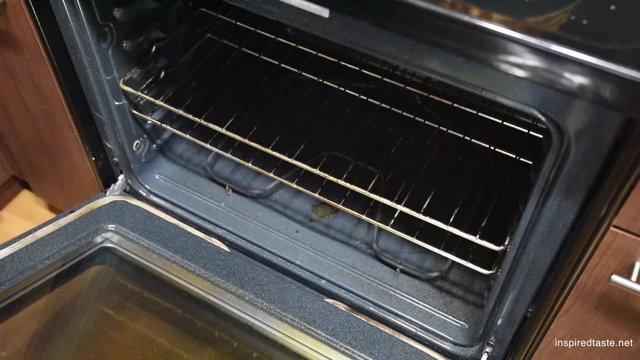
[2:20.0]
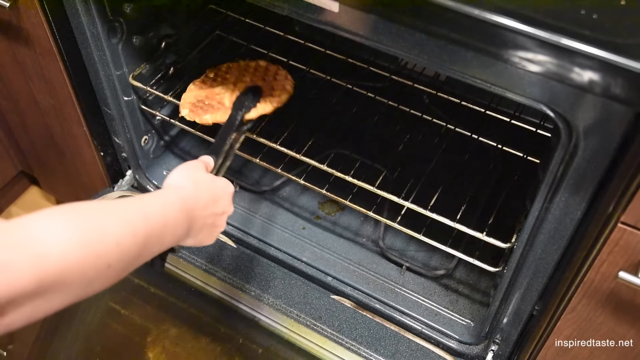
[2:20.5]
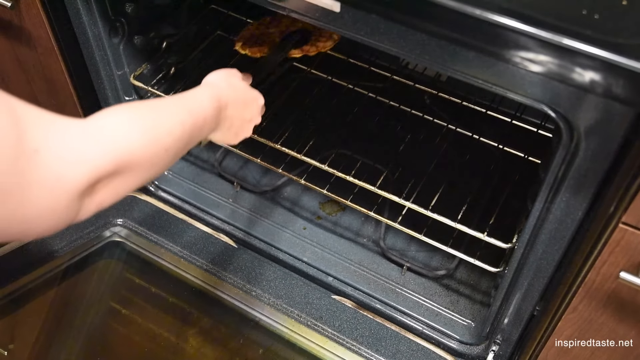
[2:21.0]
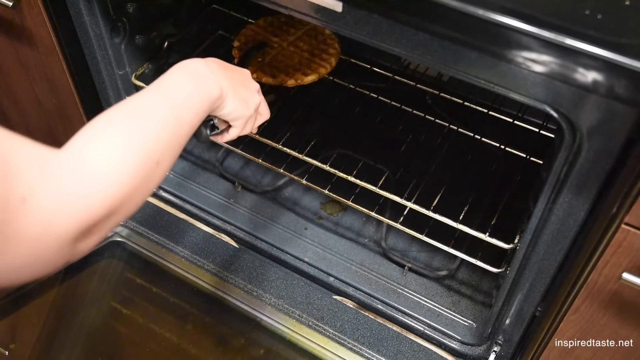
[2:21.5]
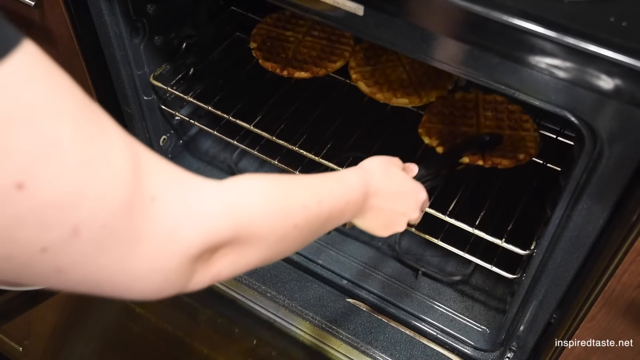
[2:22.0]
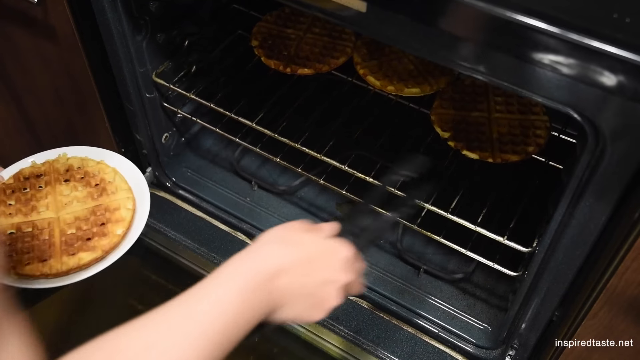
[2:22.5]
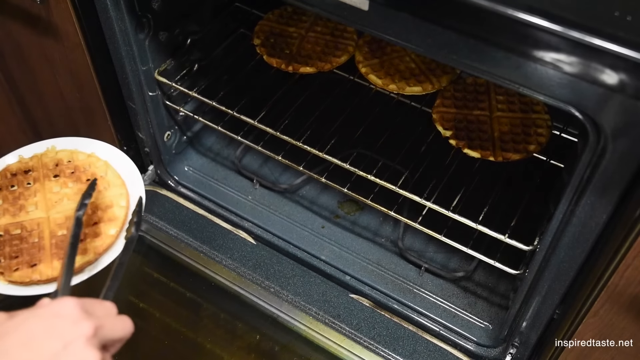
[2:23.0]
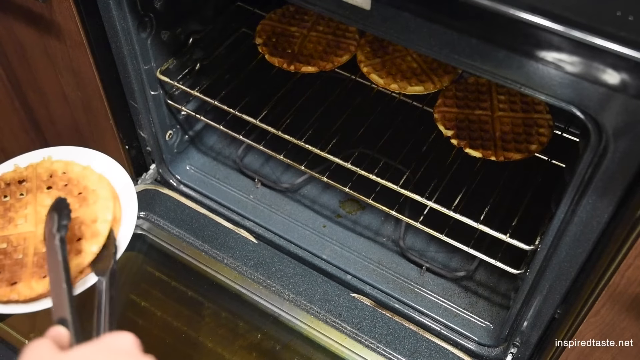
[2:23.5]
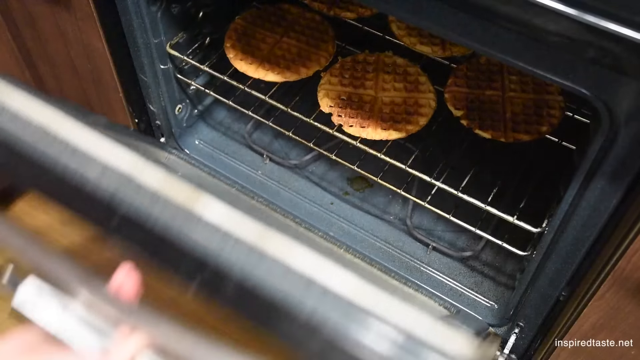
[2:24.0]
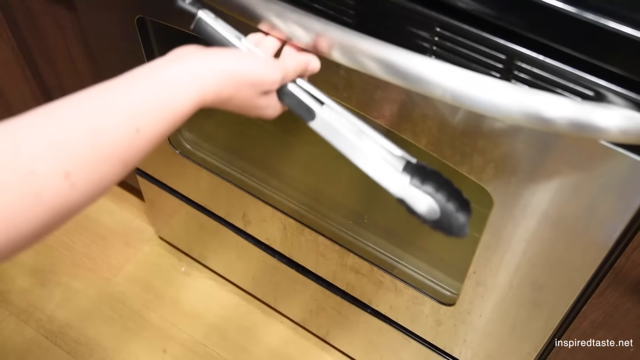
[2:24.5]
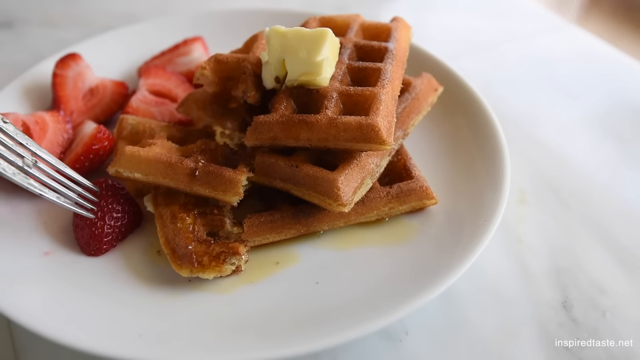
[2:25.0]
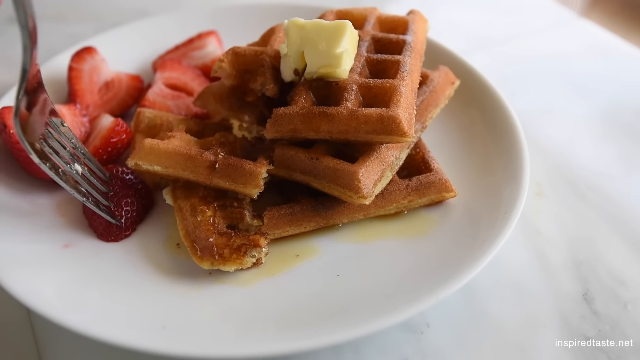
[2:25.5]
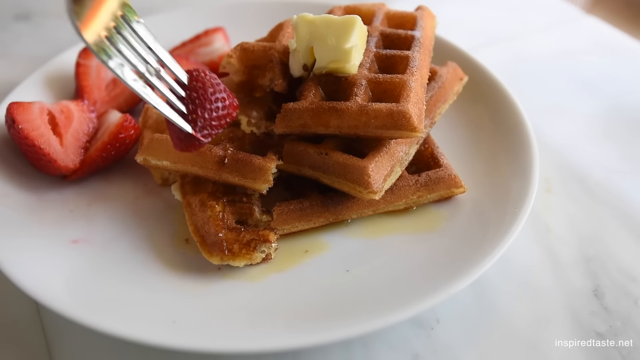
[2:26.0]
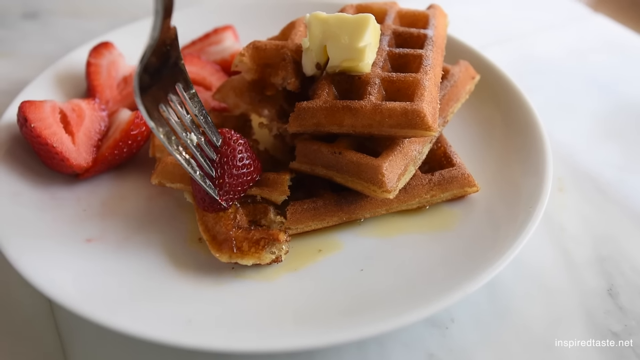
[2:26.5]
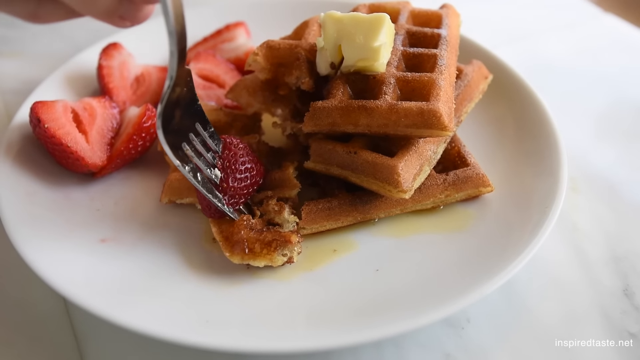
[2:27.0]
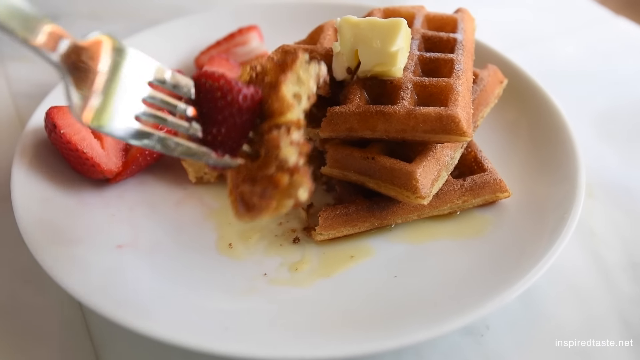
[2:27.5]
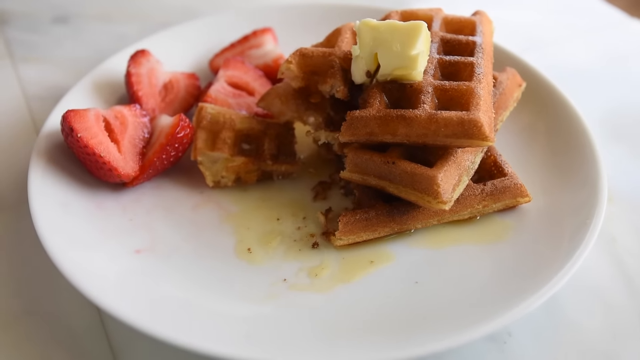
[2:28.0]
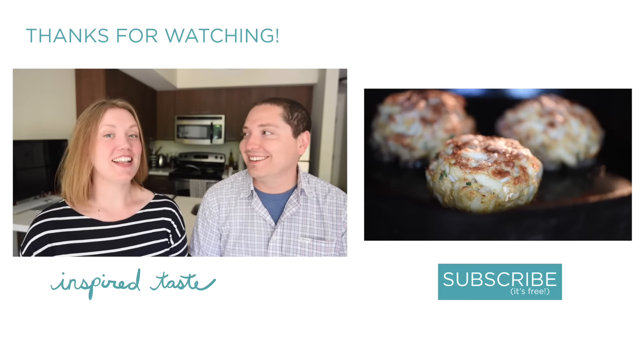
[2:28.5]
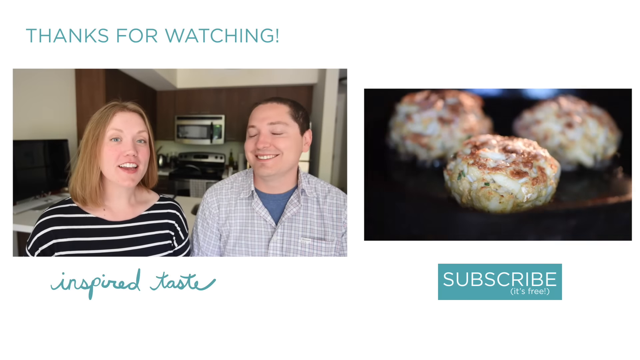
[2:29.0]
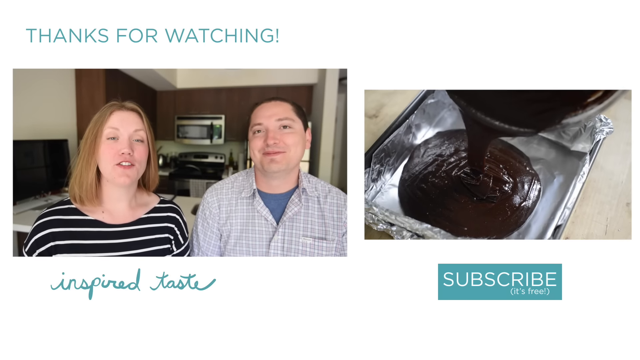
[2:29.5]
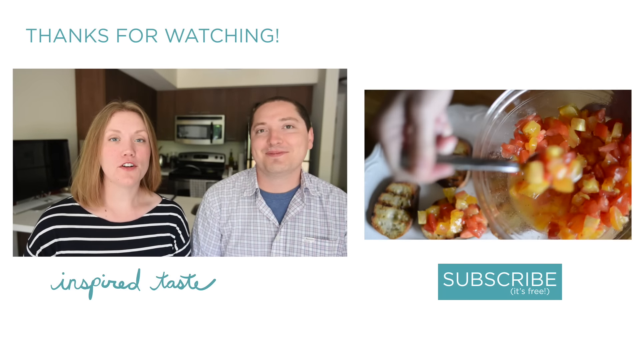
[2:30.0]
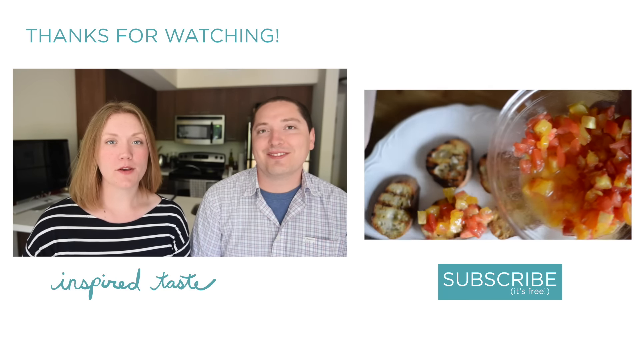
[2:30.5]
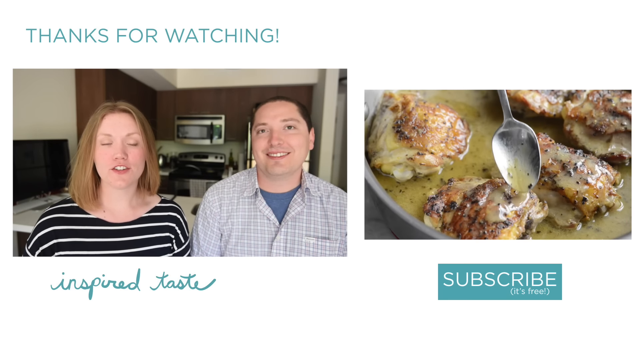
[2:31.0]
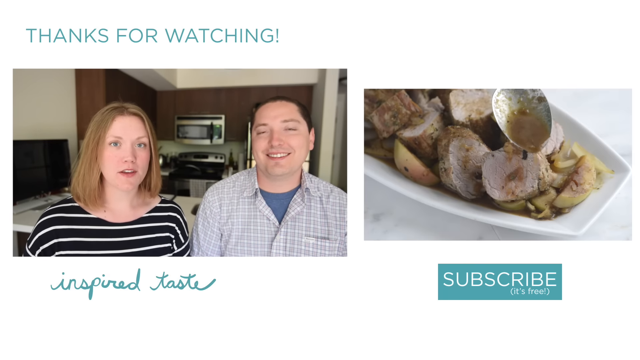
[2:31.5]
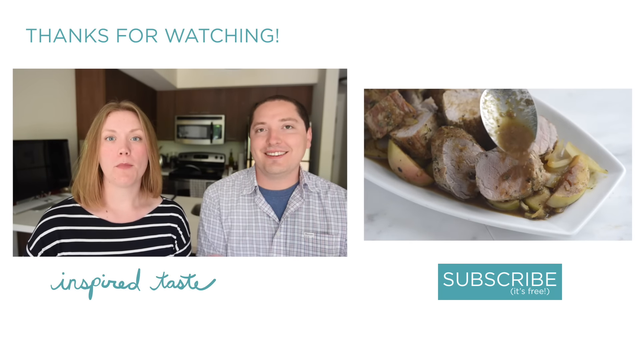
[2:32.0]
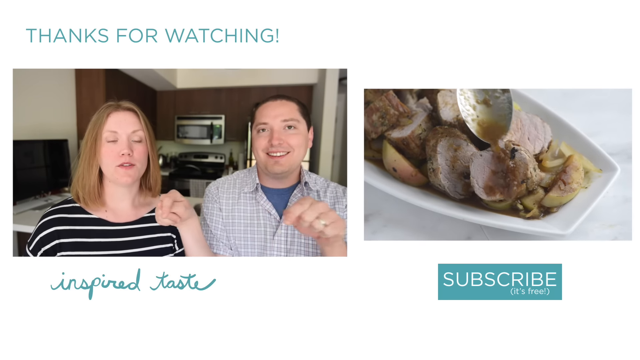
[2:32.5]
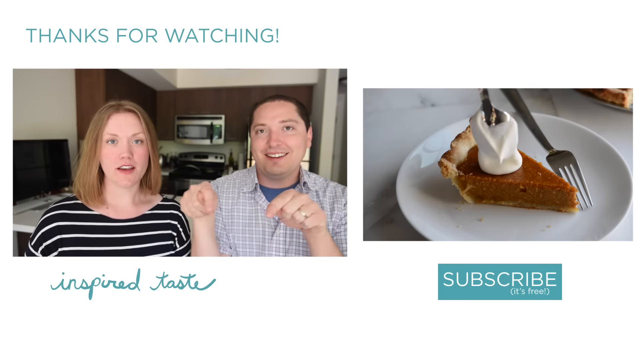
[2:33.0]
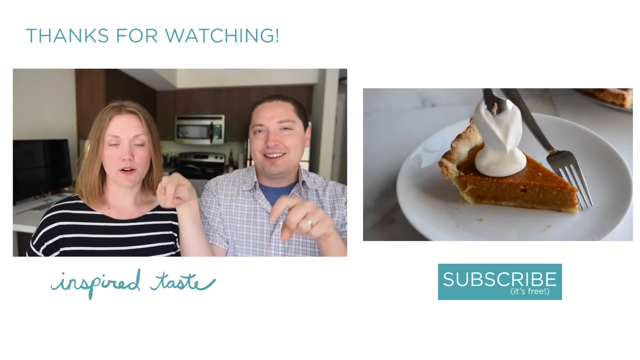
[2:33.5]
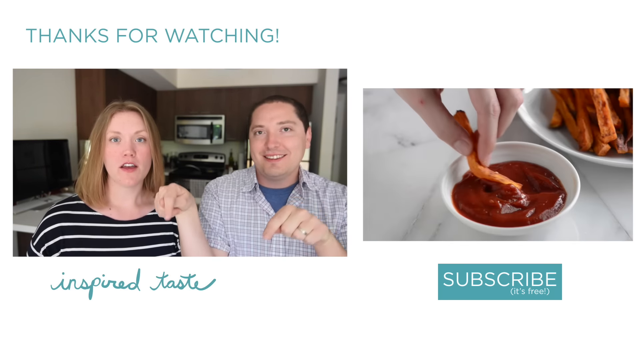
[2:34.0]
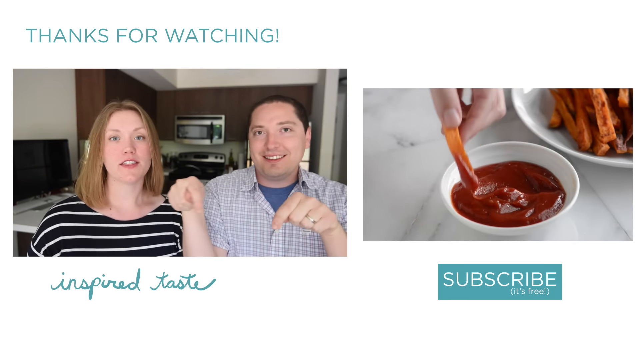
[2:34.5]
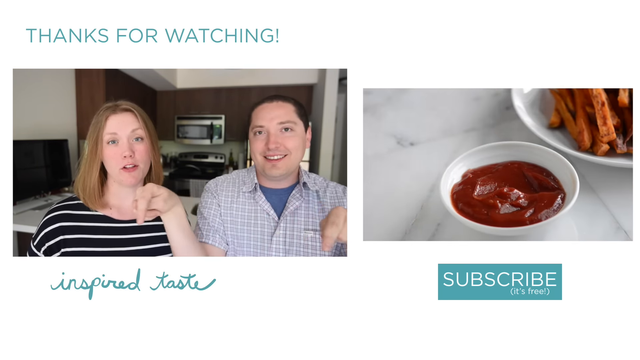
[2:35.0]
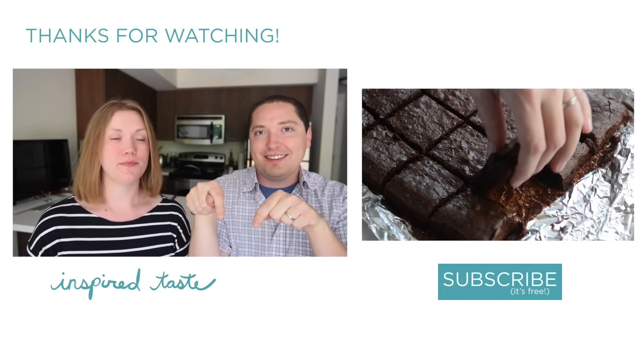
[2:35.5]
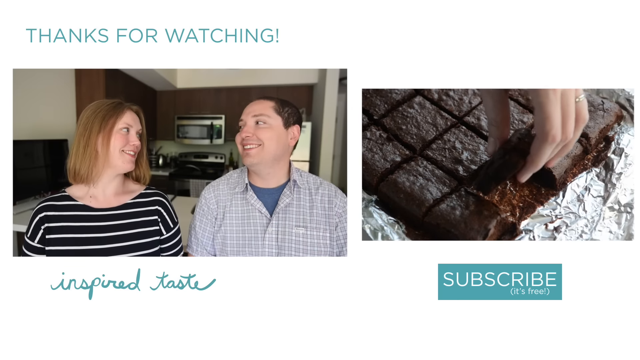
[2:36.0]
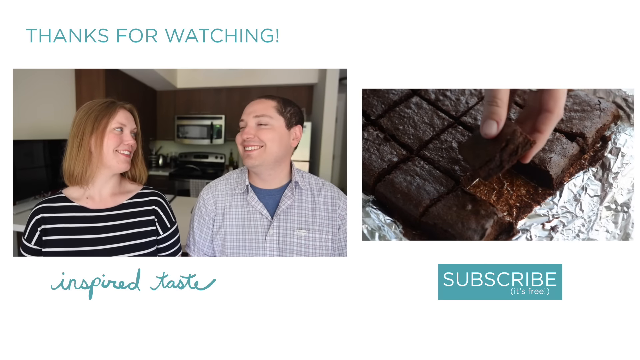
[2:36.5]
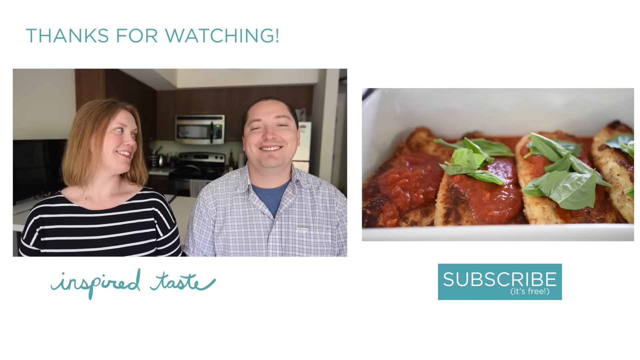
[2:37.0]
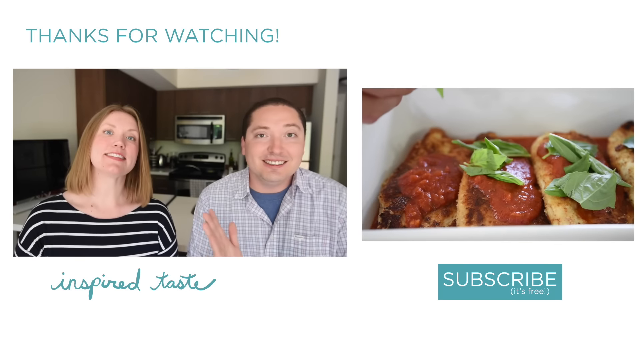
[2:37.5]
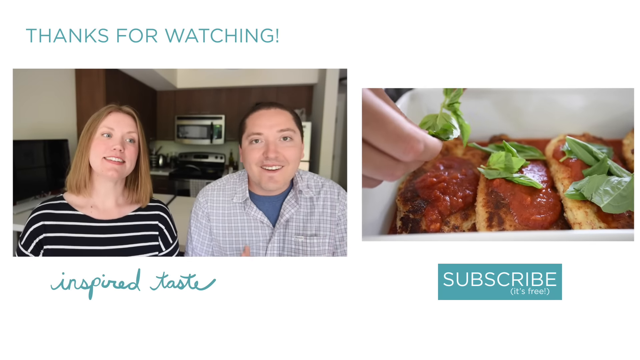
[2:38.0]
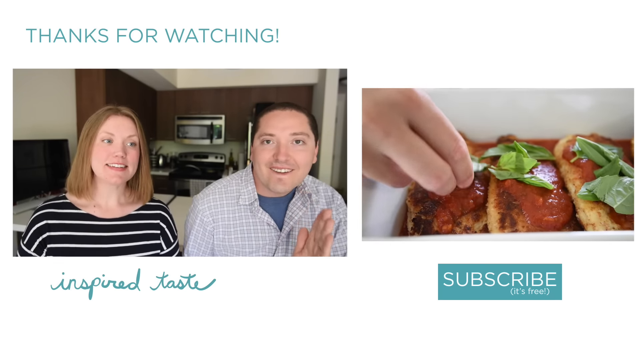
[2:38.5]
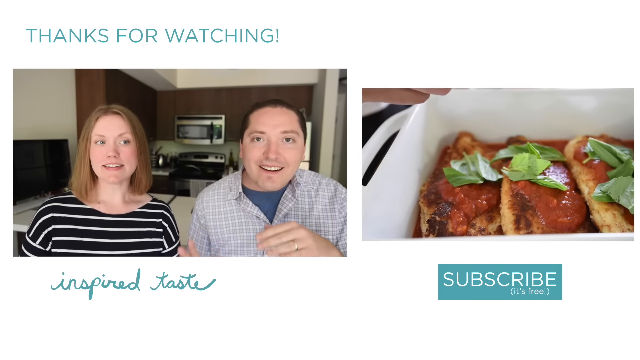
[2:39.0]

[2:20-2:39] The YouTube video's still page shows four triangles of waffle piled on top of each other at angles on a white plate, with butter and syrup on top and strawberries on the plate next to them. After play is pressed, the oven is open and someone uses tongs to put the waffles directly on the bare shelf of the oven rack, not on a plate or pan. A total of five waffles are put in, even though there were only four on the plate. The video then goes to a plate of waffles with strawberries, showing the waffles being cut, and then cuts to a couple talking about the waffles and pointing down at what they are eating. A recipe with noodles appears in a window off to the side, and a next video shows seriously good shrimp carbonara, with the couple kind of dancing in the background.